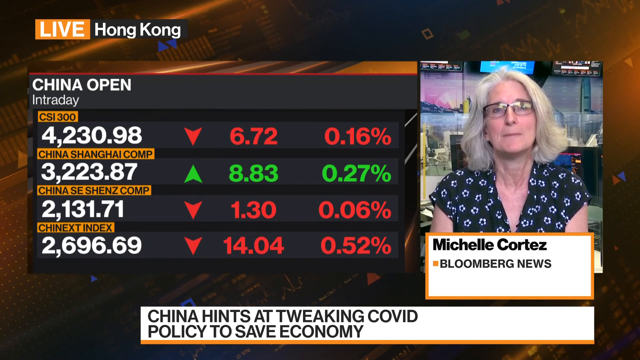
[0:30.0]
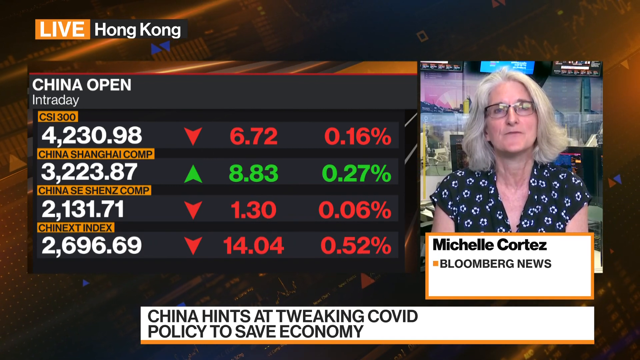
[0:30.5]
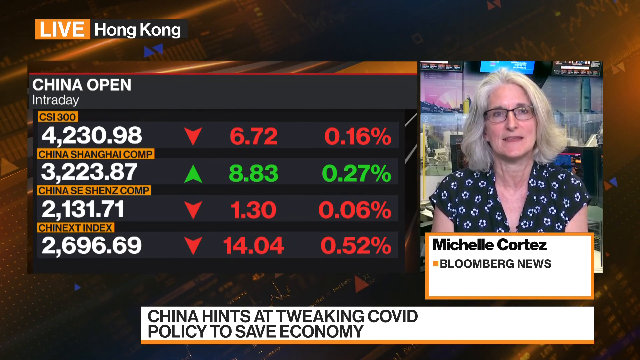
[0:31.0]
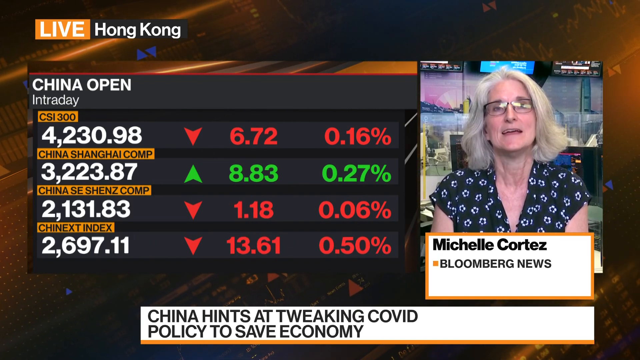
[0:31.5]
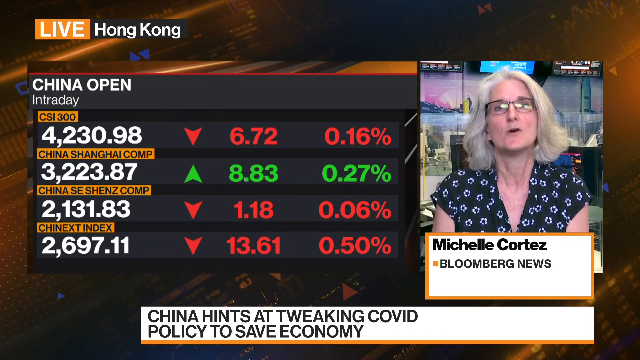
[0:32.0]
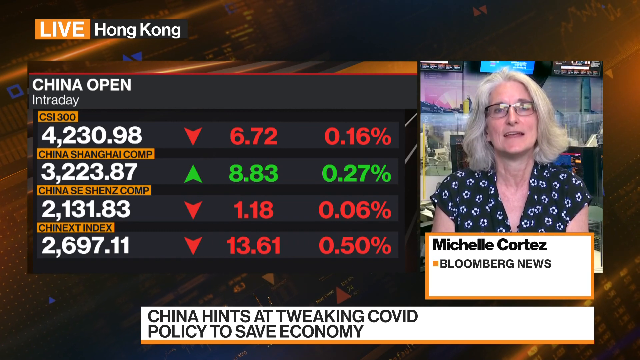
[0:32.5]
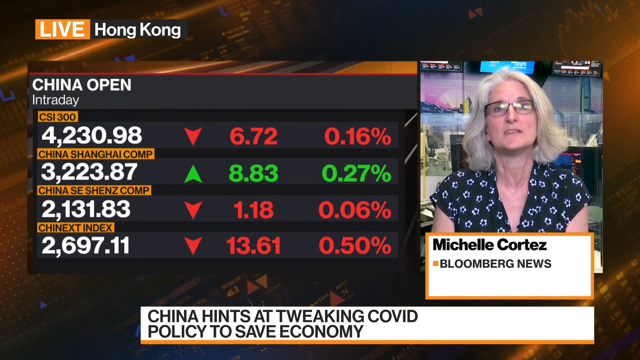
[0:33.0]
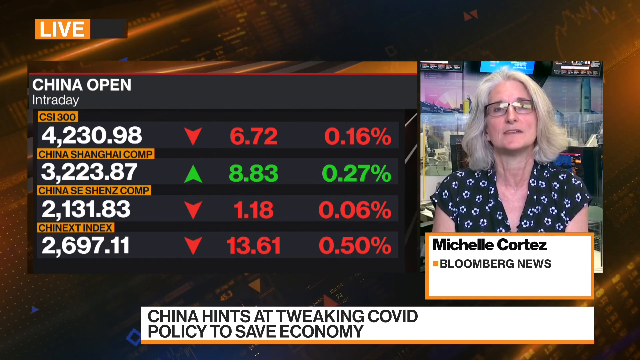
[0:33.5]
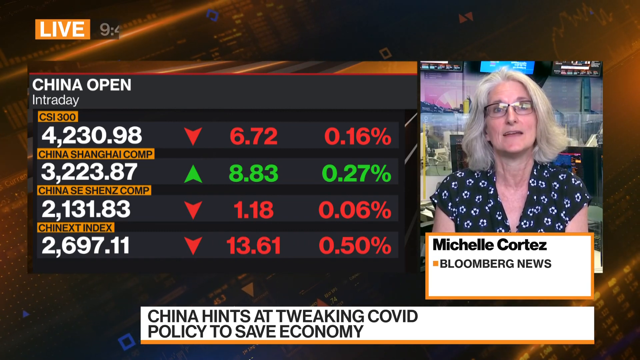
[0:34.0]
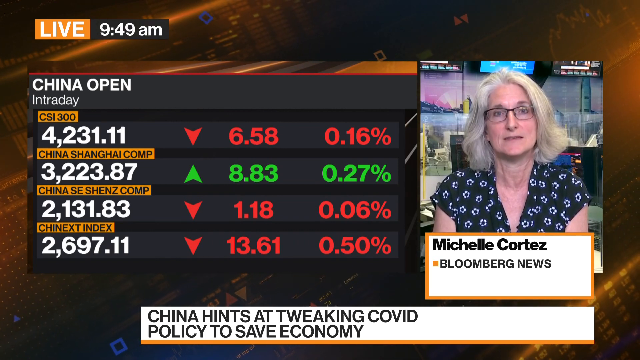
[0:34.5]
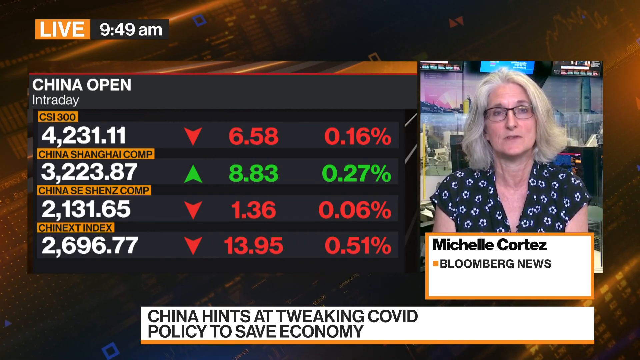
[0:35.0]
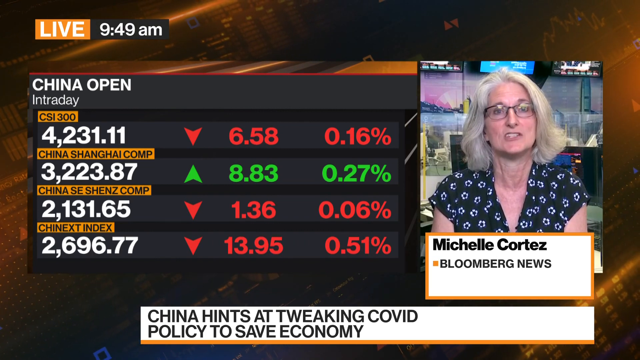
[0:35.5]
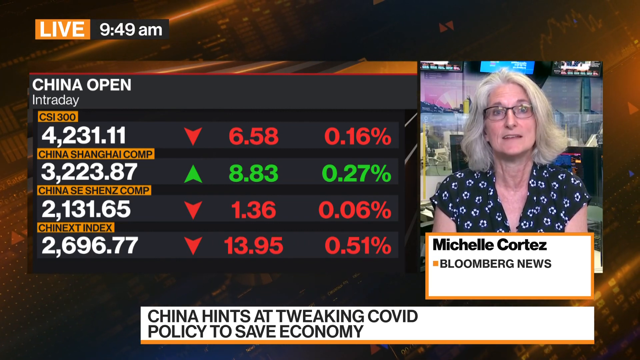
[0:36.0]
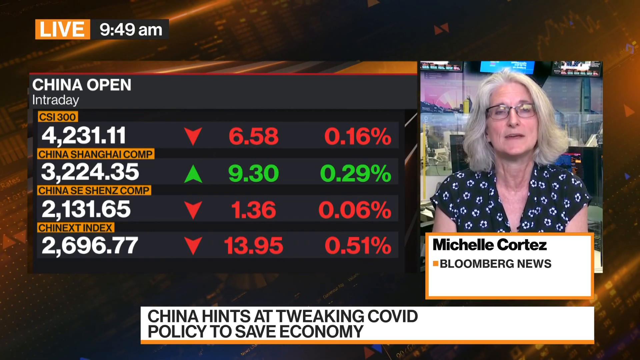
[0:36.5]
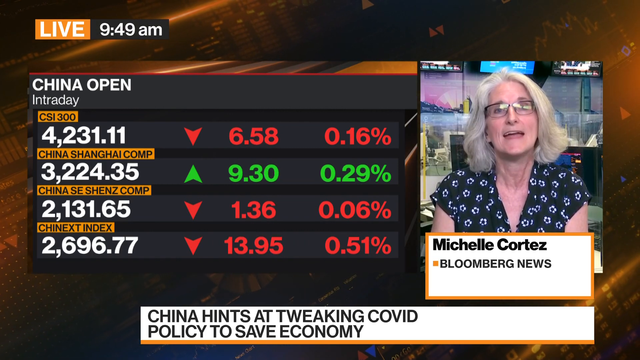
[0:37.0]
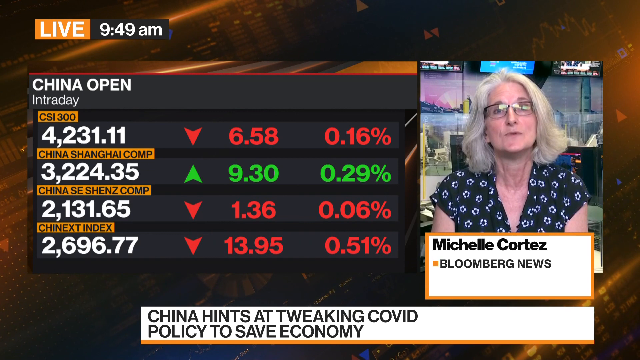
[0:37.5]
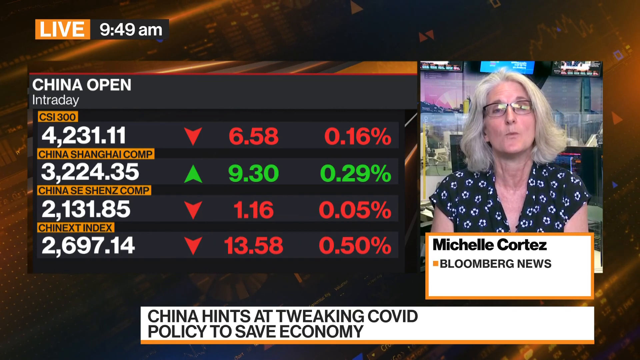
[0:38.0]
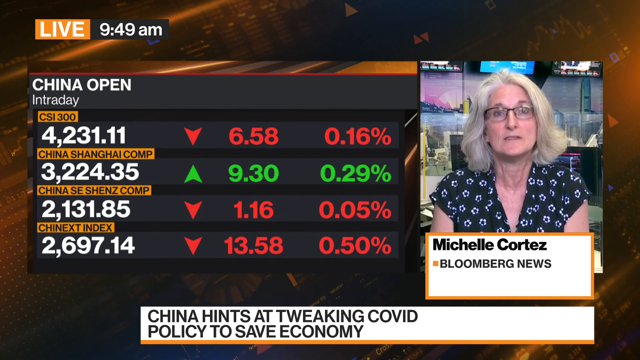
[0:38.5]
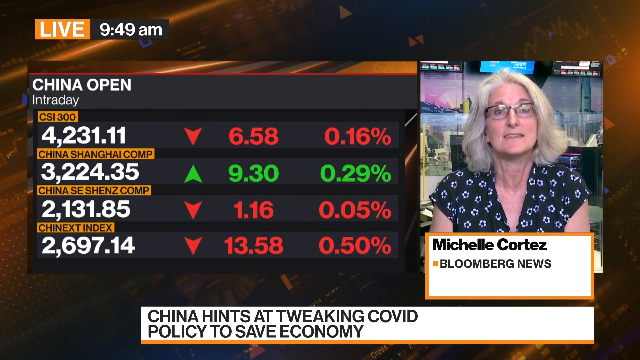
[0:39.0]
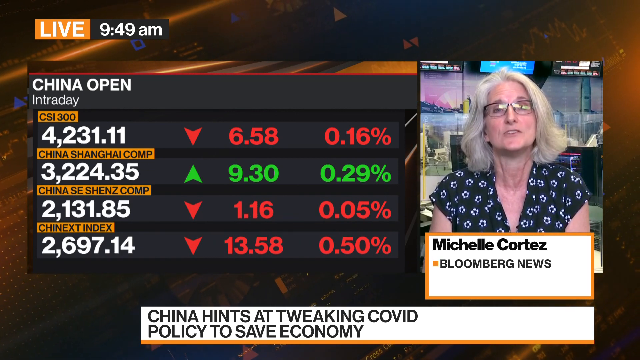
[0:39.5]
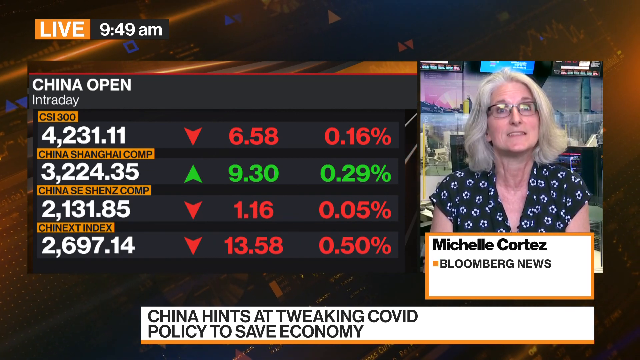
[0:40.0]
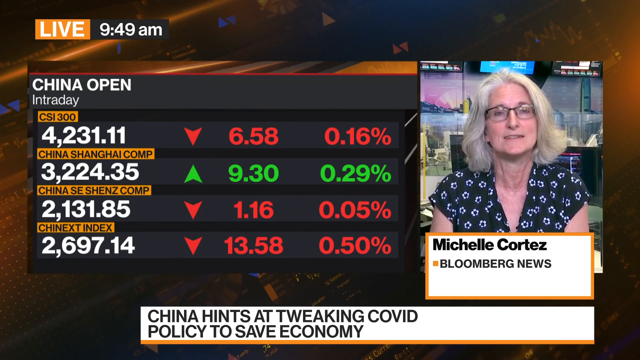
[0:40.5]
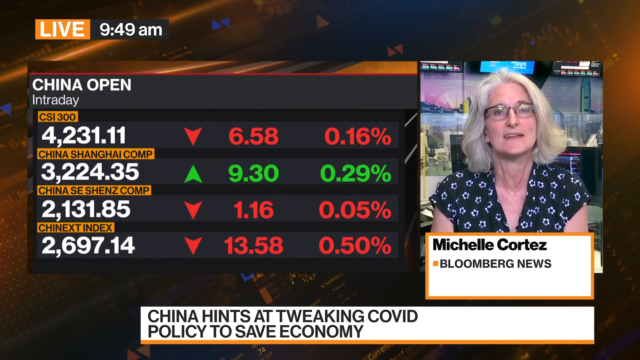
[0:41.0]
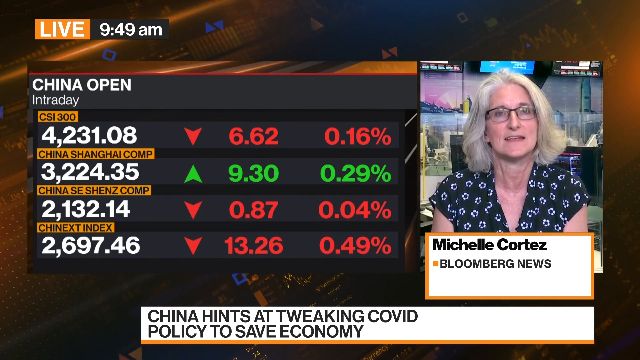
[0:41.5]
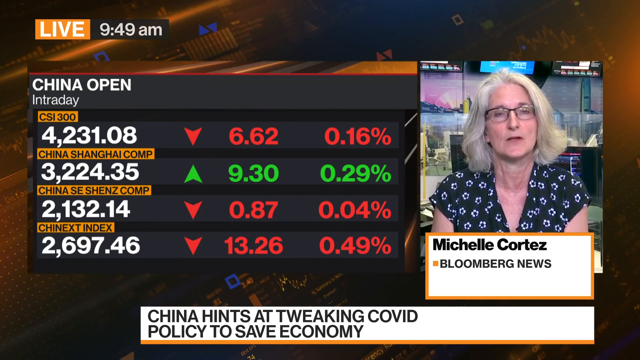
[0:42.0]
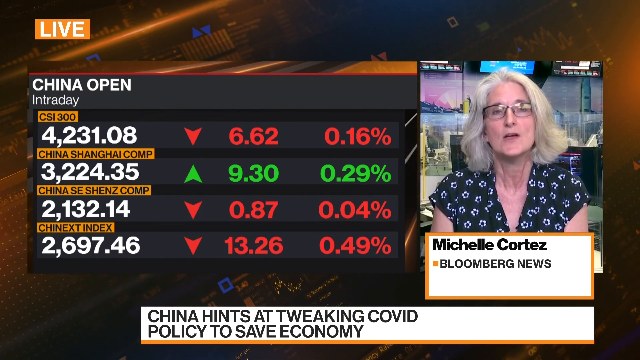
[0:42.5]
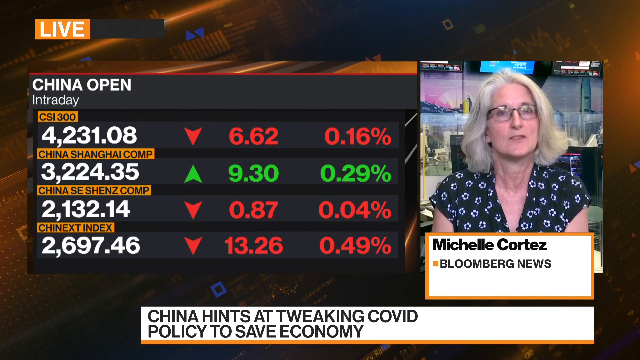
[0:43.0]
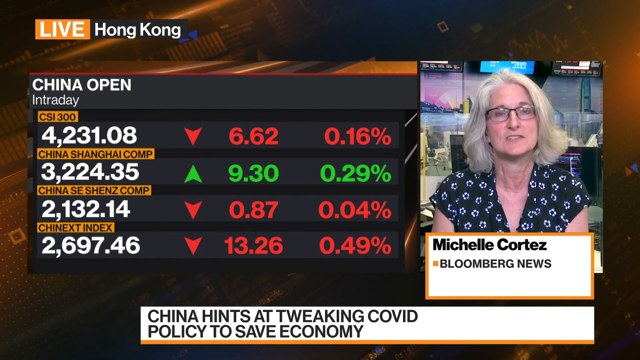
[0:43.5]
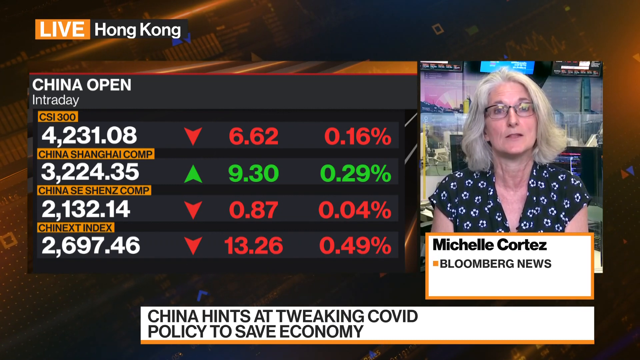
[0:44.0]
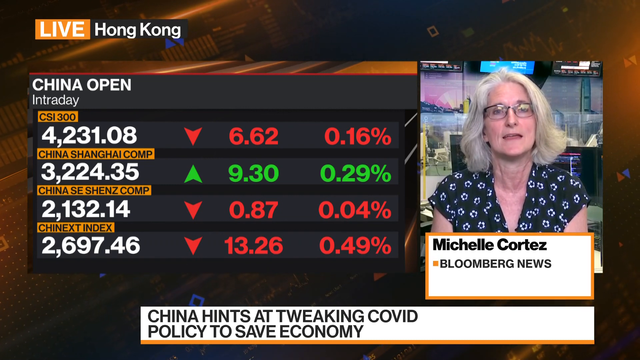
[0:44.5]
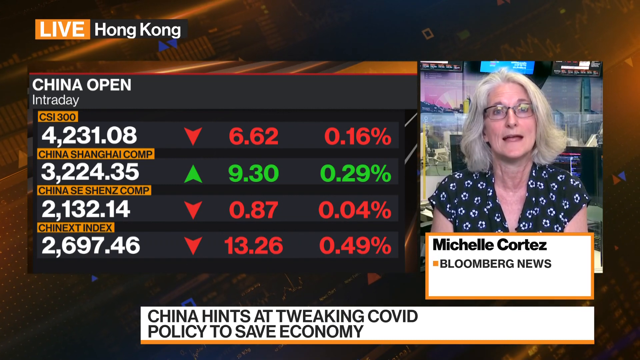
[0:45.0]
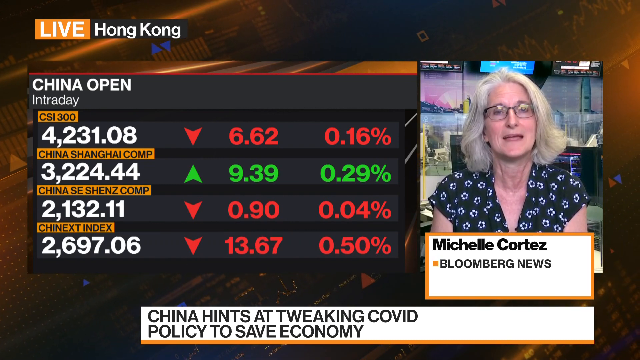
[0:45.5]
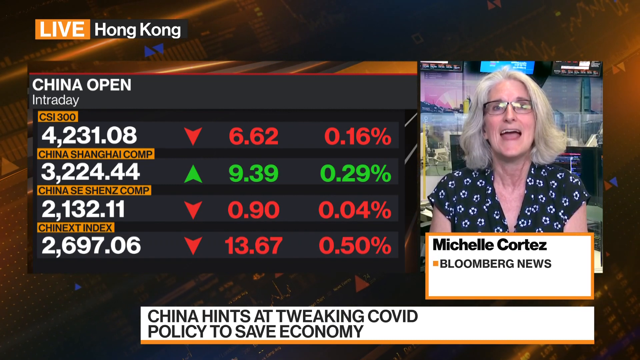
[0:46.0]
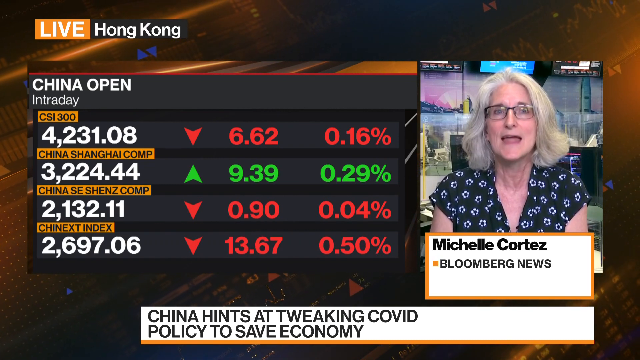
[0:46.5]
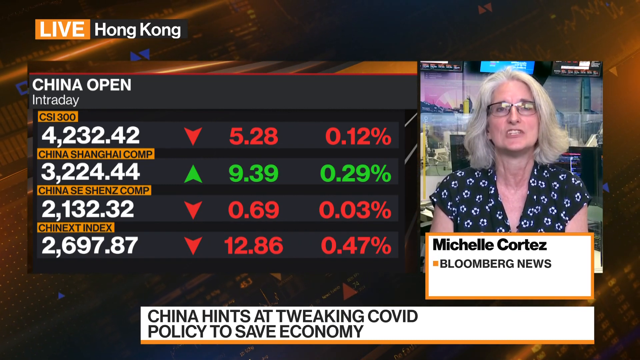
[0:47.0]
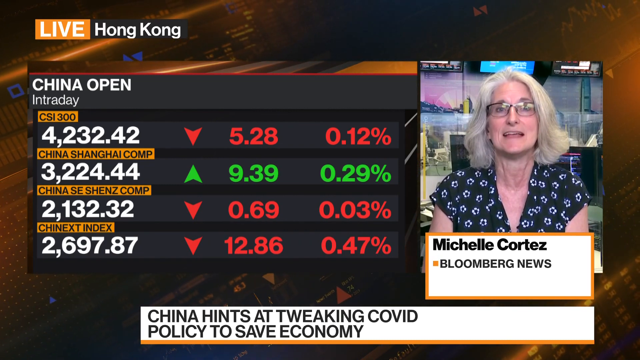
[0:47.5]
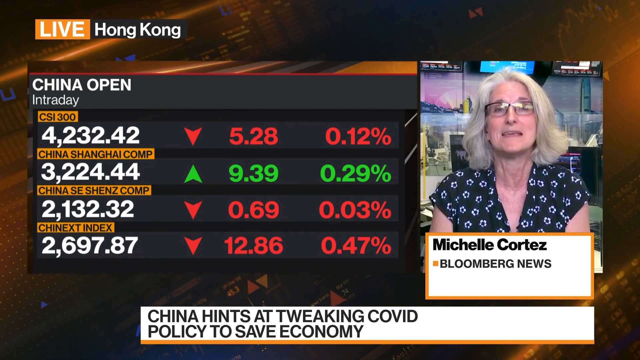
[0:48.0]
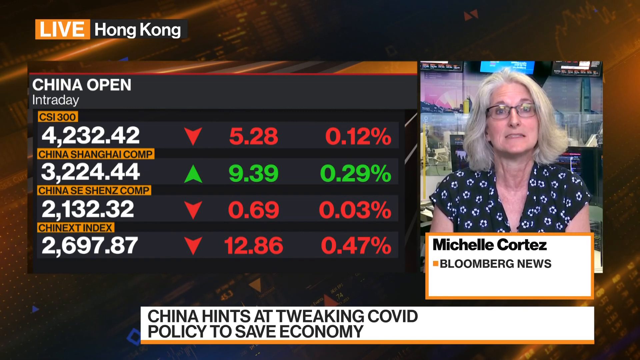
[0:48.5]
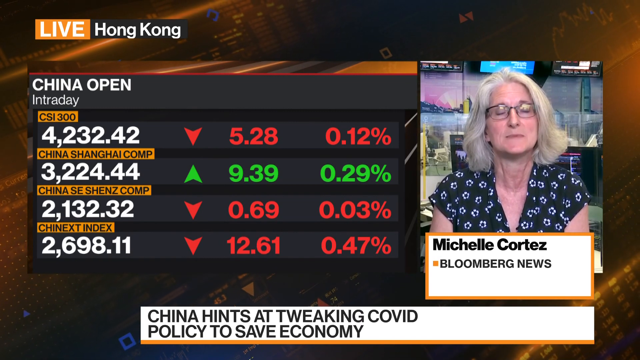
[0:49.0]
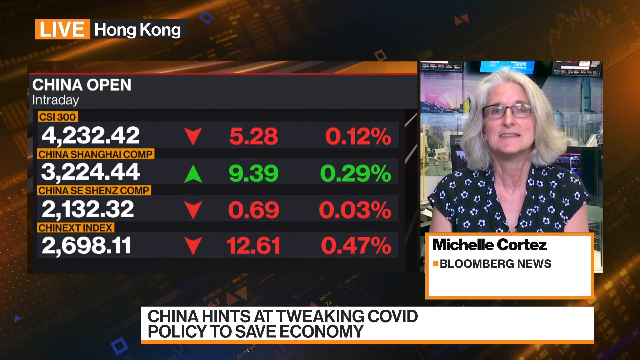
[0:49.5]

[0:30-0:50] On the Bloomberg News Channel, a still image of China stock market information is on the left-hand side of the screen, and the top left-hand corner reads "Live Hong Kong." To the right of the stock market information is a video of Michelle Cortez, with "Bloomberg News" underneath her name. A banner at the bottom reads "China hints at tweaking COVID policy to save economy." Michelle looks directly at the camera and speaks to someone who is not seen on camera. As she speaks, her eyebrows move up and down with her expressions. The person she is speaking to is never shown.